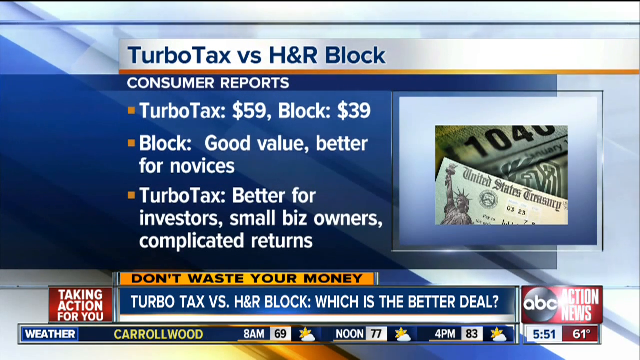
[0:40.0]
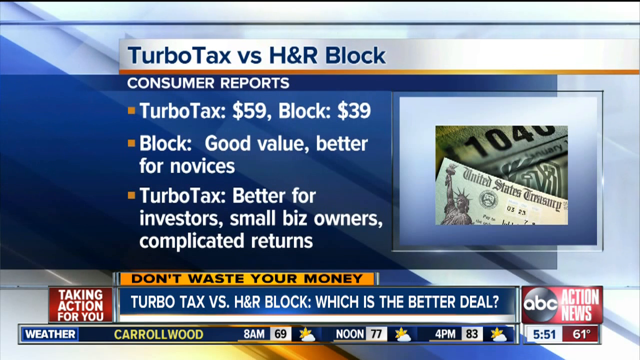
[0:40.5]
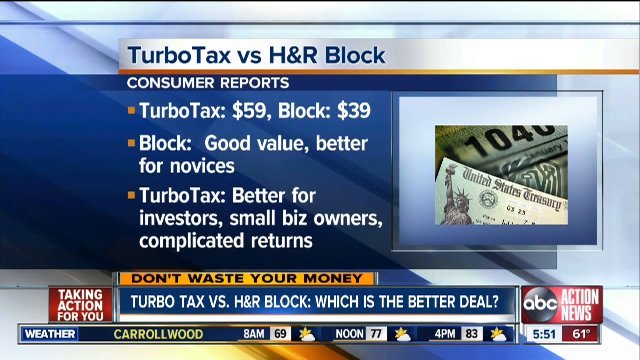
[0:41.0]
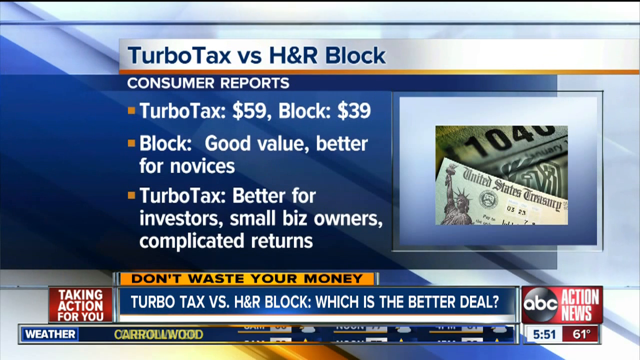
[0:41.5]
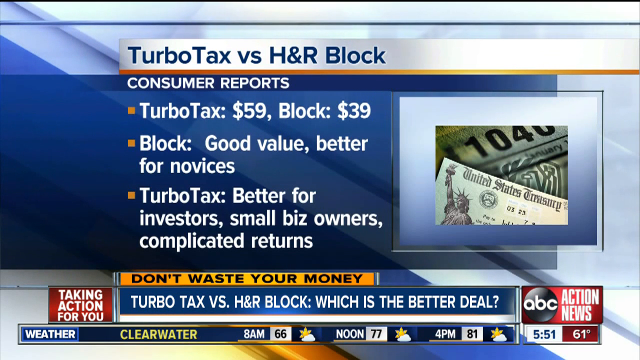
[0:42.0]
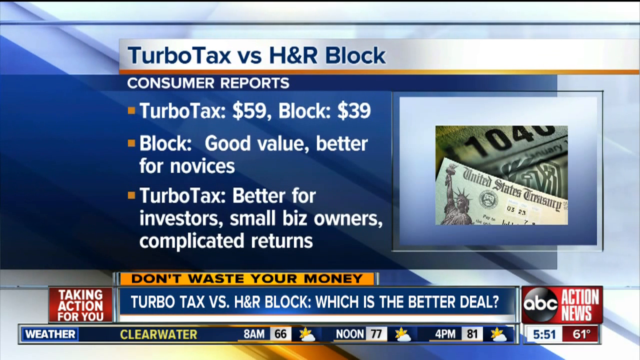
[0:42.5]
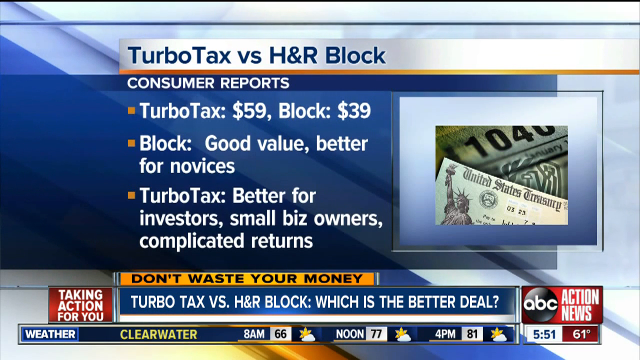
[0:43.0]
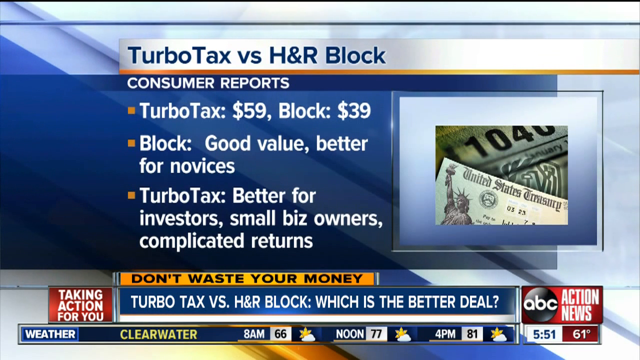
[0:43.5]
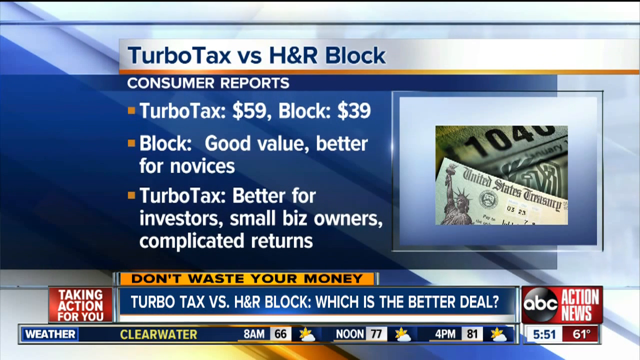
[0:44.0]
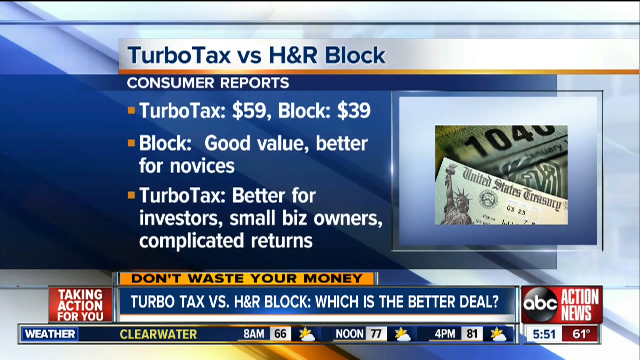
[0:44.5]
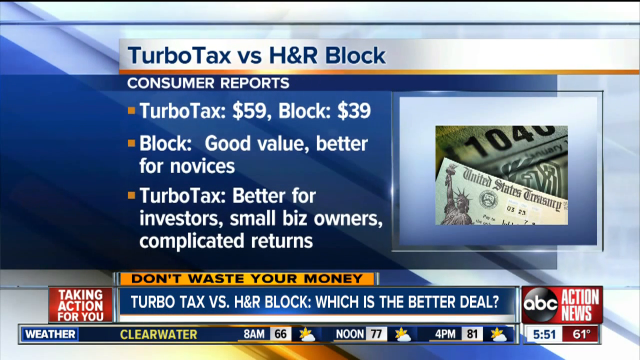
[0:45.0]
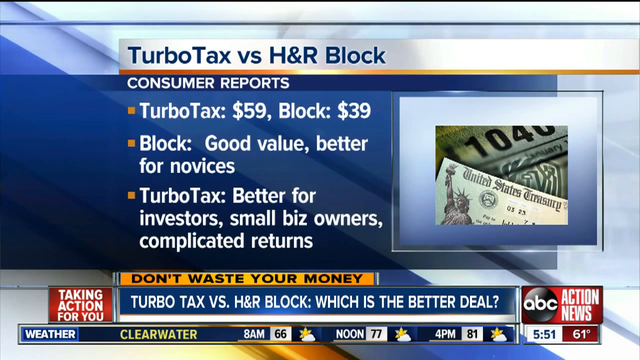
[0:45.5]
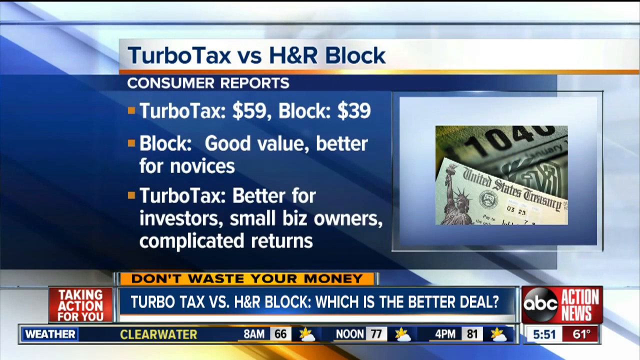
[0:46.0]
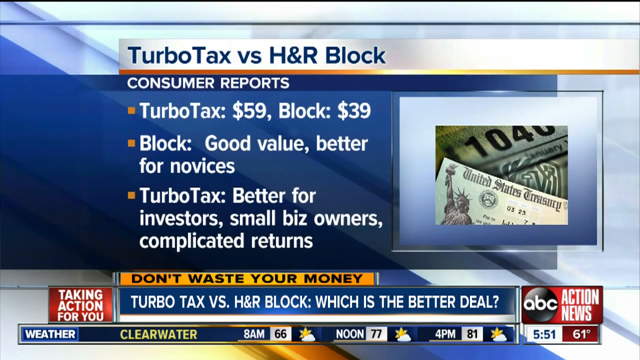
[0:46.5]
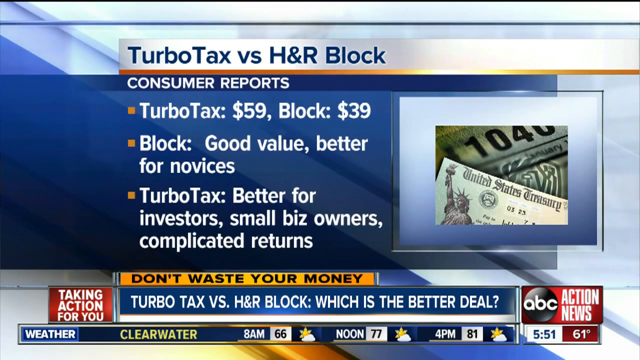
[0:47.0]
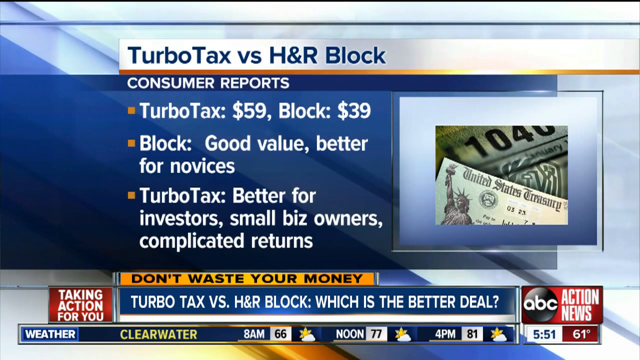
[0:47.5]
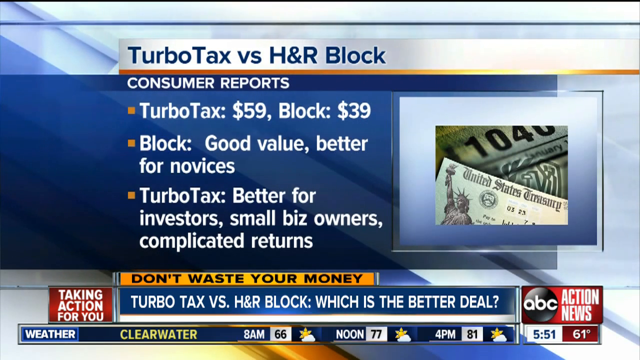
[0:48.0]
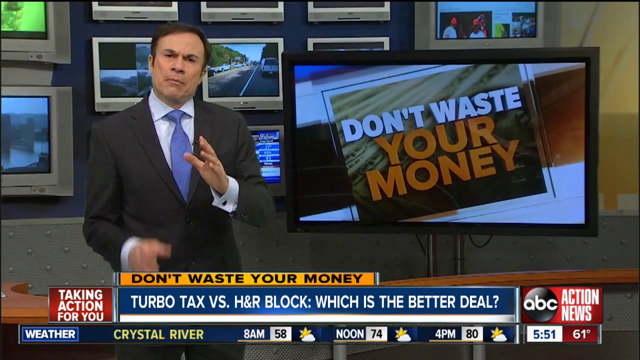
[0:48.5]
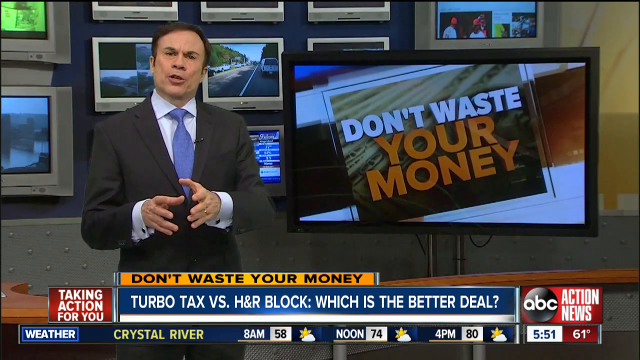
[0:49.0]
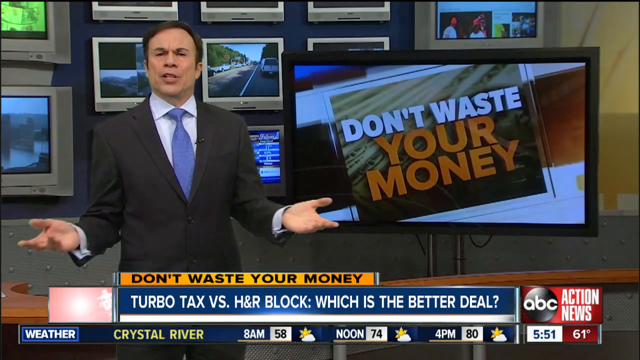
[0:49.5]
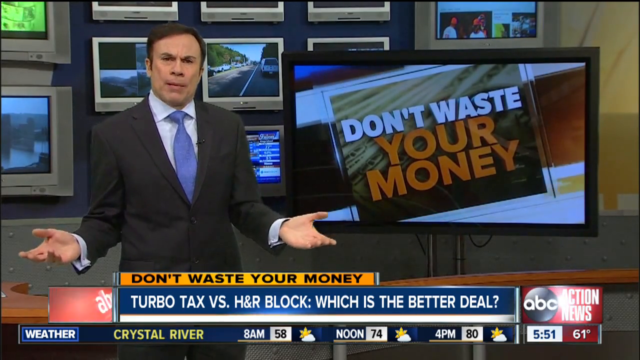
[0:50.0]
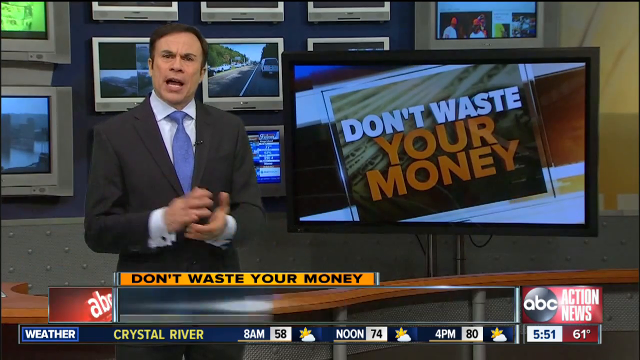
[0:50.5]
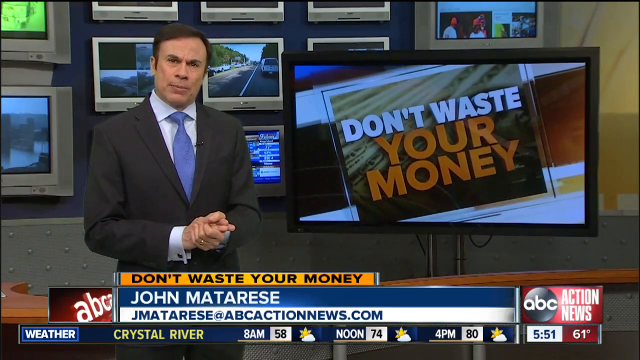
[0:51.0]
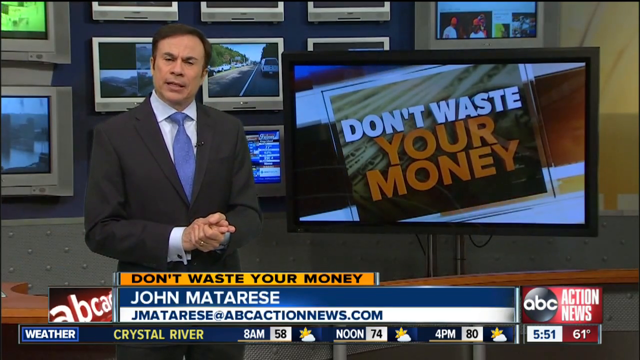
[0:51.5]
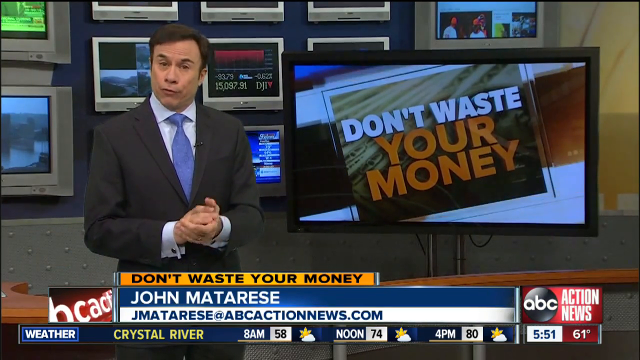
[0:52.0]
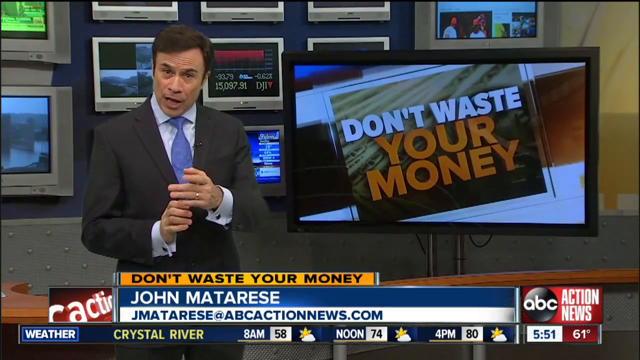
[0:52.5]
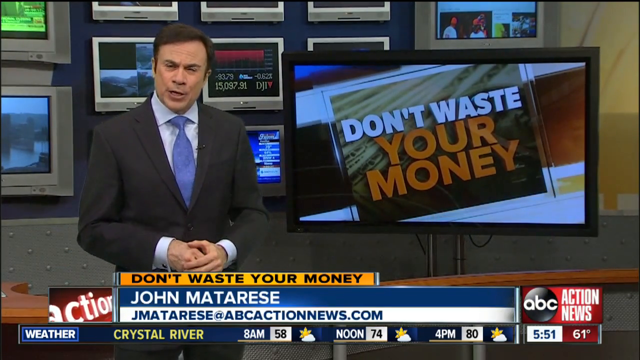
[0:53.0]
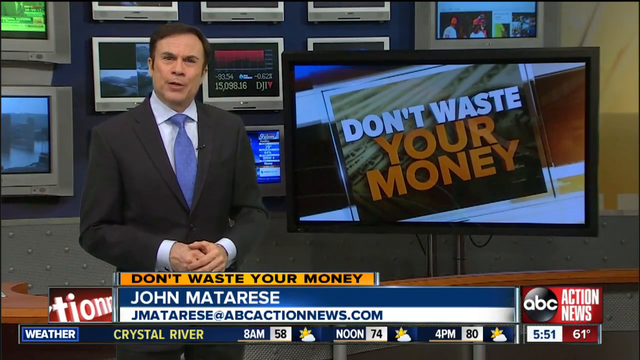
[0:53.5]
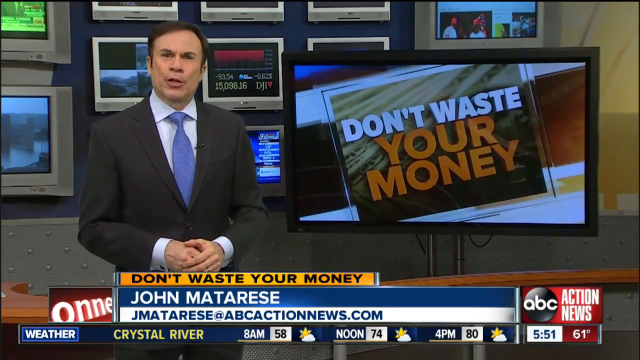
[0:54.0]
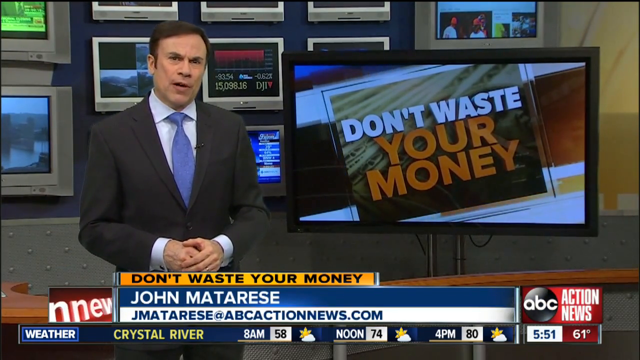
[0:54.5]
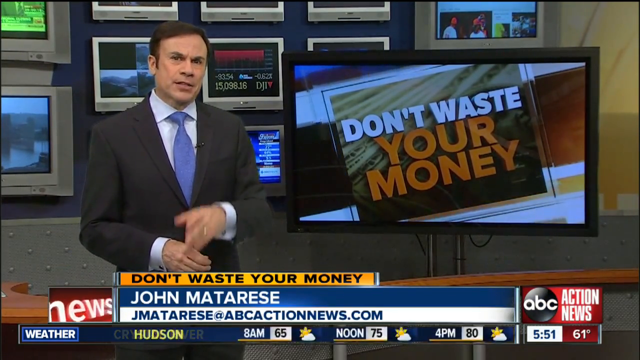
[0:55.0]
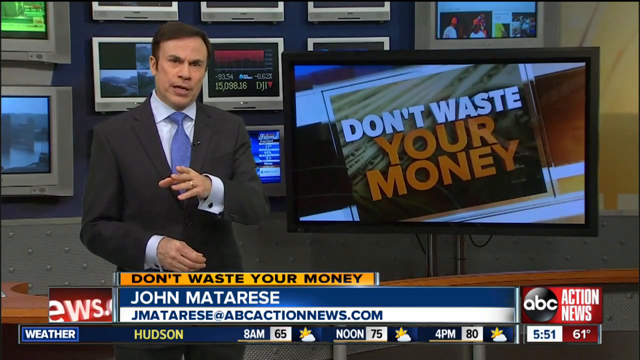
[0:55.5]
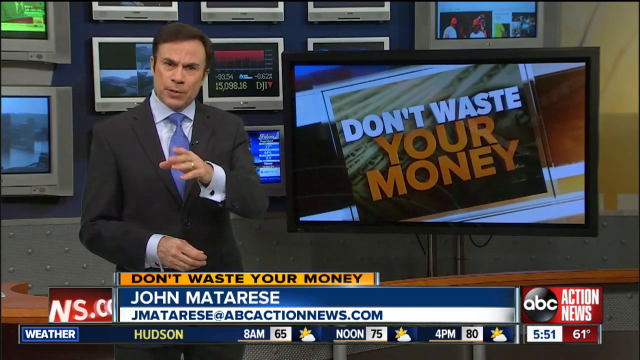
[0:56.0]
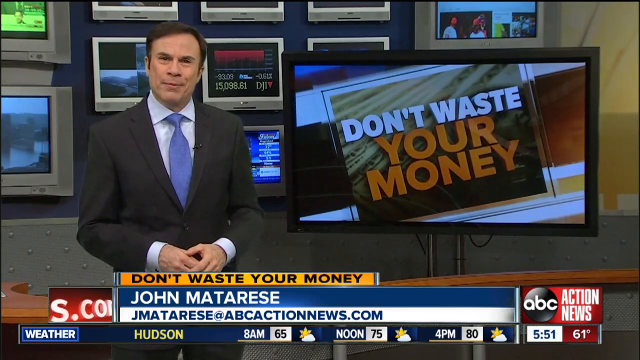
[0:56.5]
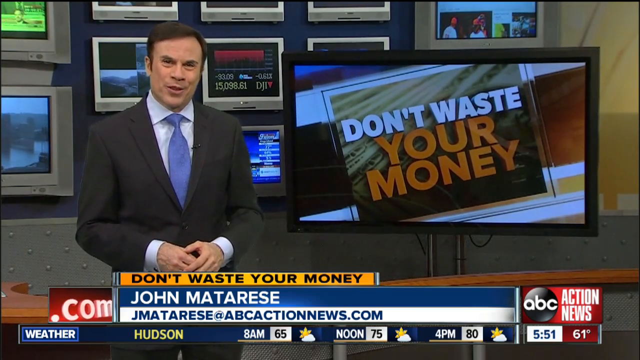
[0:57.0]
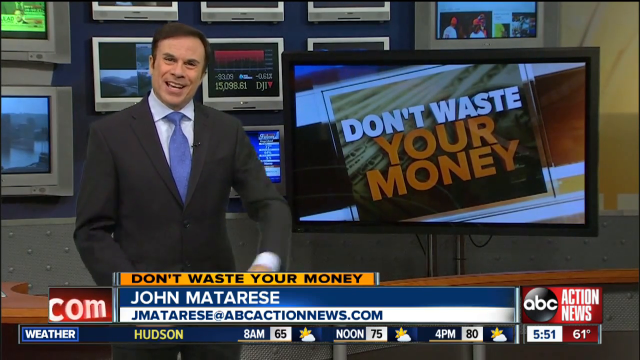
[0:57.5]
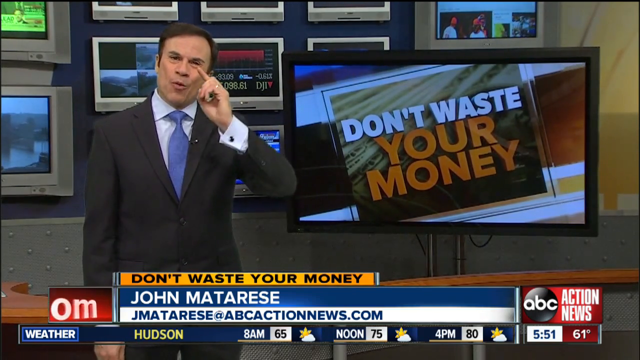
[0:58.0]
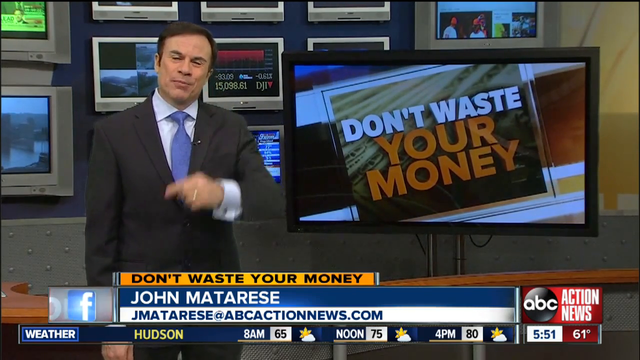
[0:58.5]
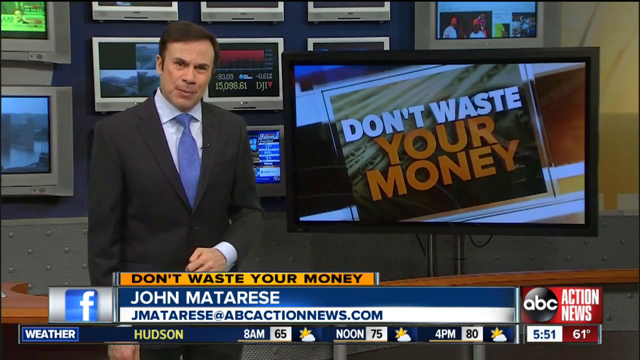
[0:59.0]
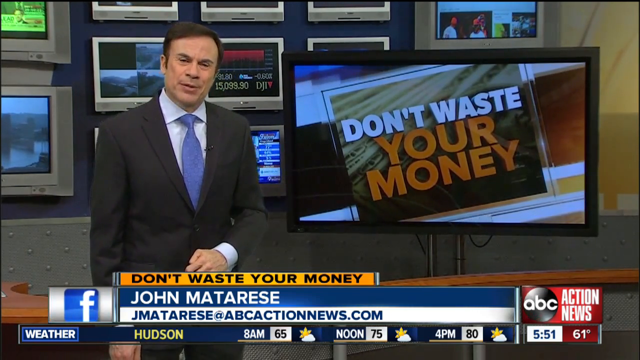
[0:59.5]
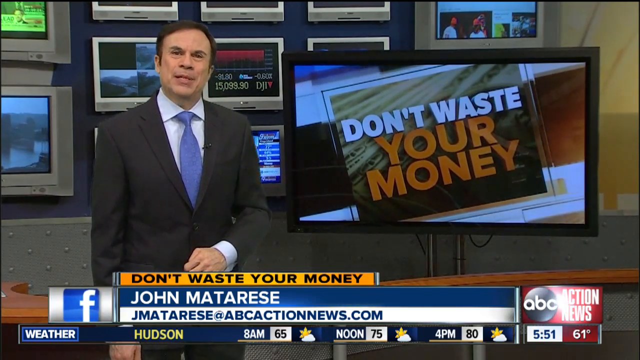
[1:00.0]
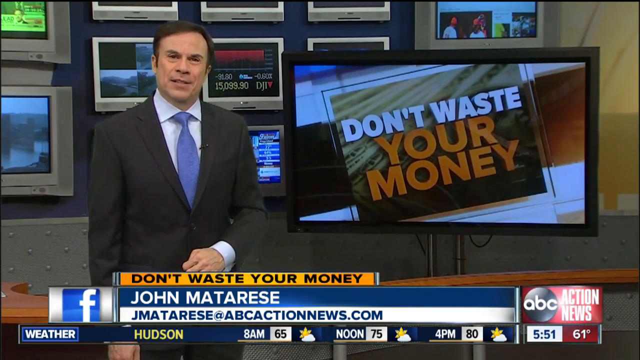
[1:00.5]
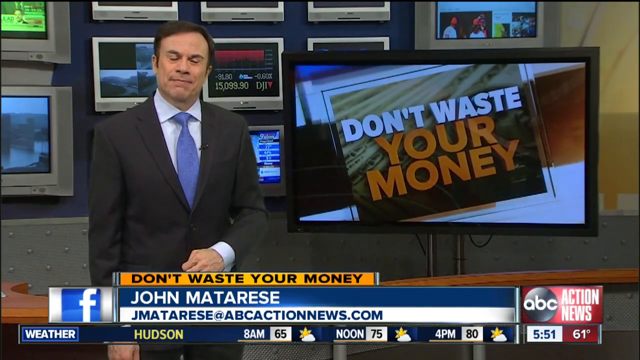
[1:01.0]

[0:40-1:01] The PowerPoint screen is still up, with the title "TurboTax versus H&R Block," "consumer reports" under it, and three bullet points reading "TurboTax $59 block $39 block good value better for novices TurboTax better for investors small biz owners complicated returns." On the right is an image of a United Treasury check and the 1040 part of a document. The video then goes back to a newsroom with a bunch of TVs showing different images. A man, probably in his 50s and wearing a suit and tie, stands next to a flat-screen TV that says "don't waste your money." His name is John Matariz. The text "don't waste your money" remains, and under it is "jmatariz@abcactionnews.com".